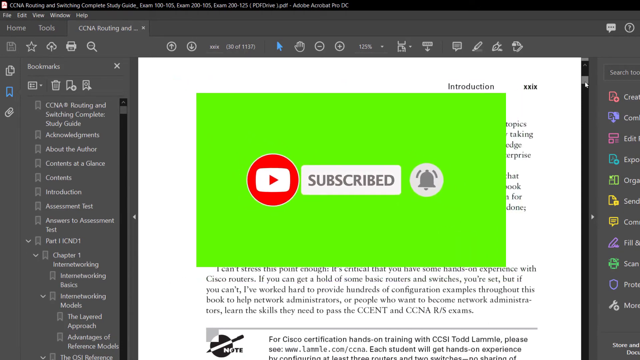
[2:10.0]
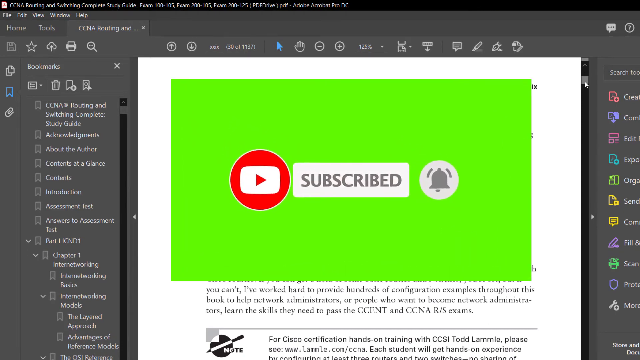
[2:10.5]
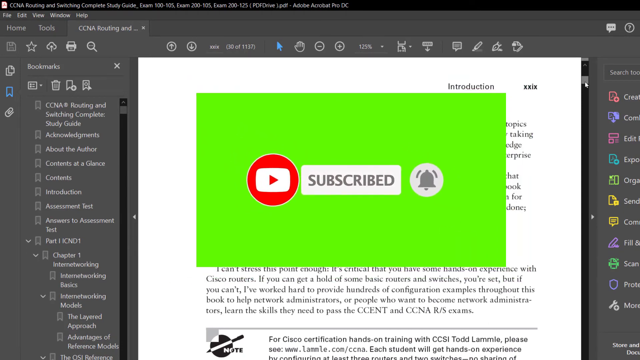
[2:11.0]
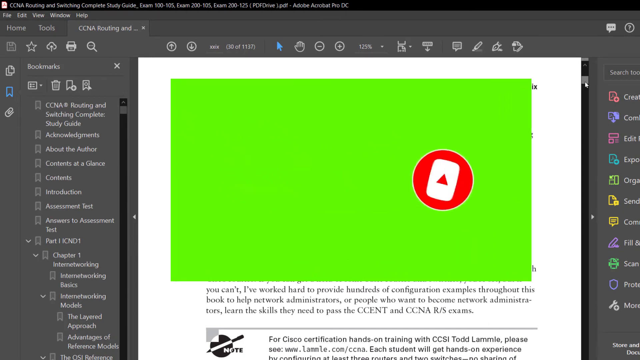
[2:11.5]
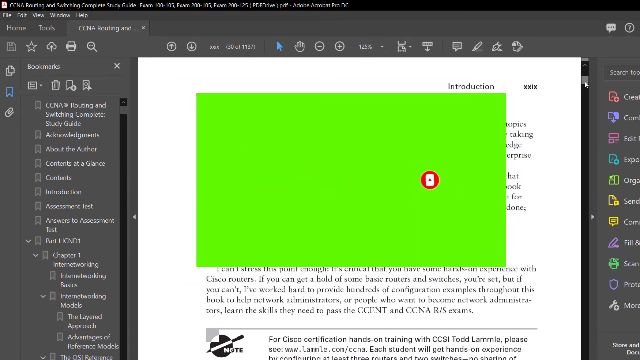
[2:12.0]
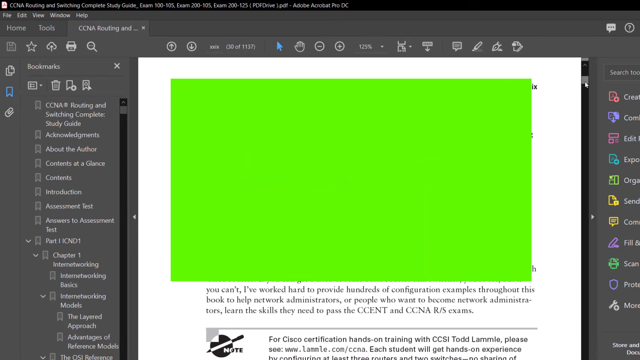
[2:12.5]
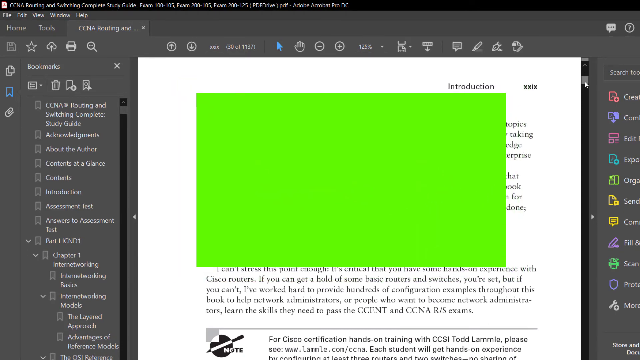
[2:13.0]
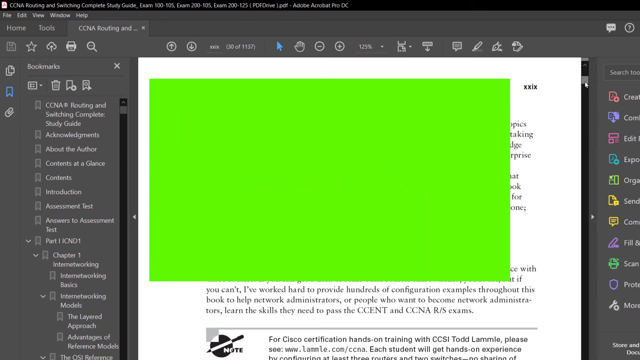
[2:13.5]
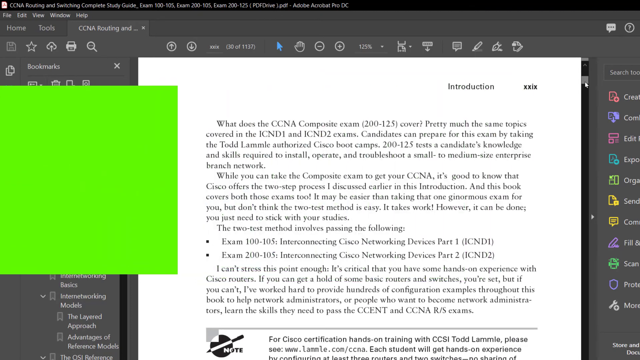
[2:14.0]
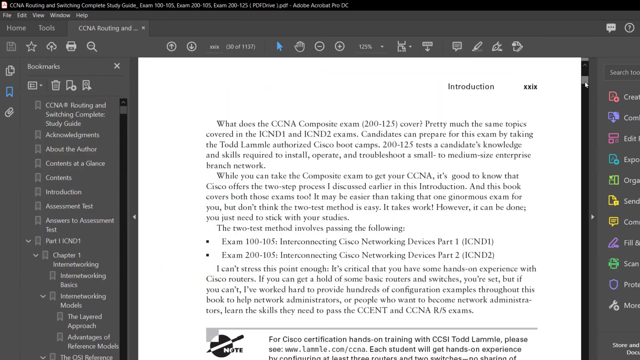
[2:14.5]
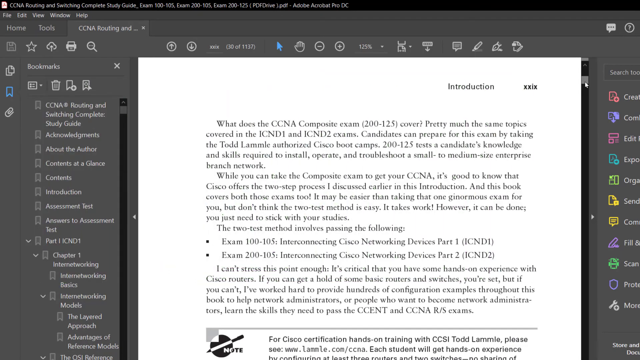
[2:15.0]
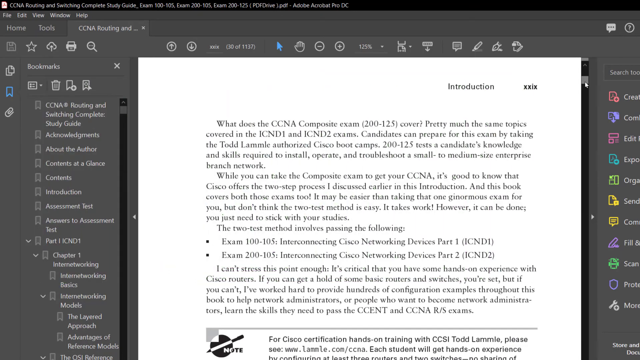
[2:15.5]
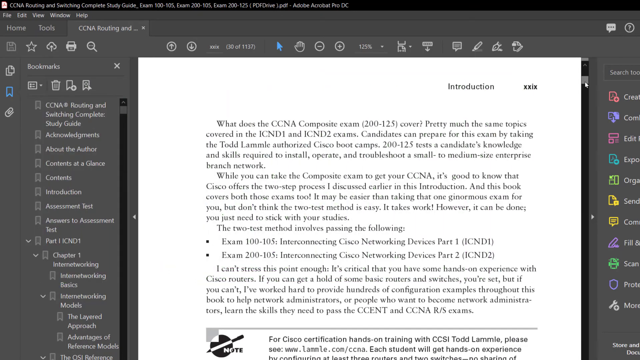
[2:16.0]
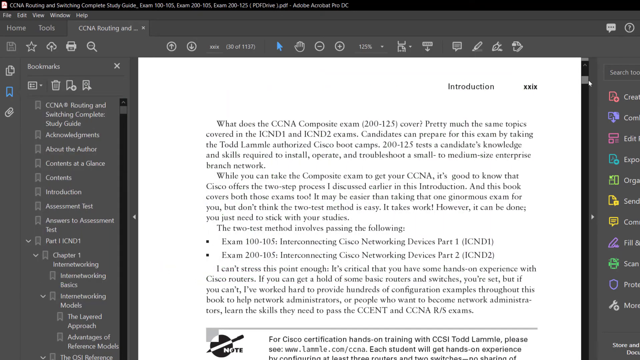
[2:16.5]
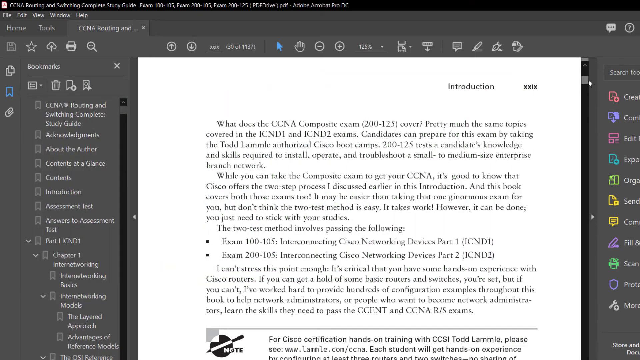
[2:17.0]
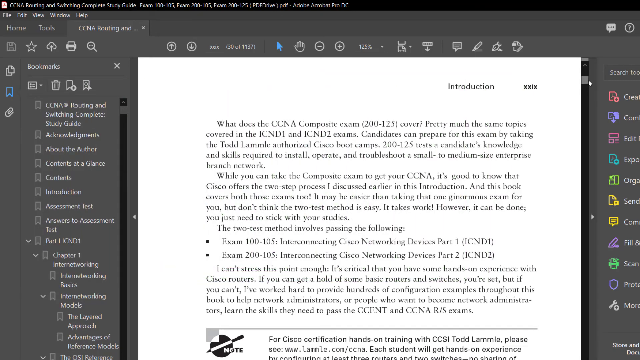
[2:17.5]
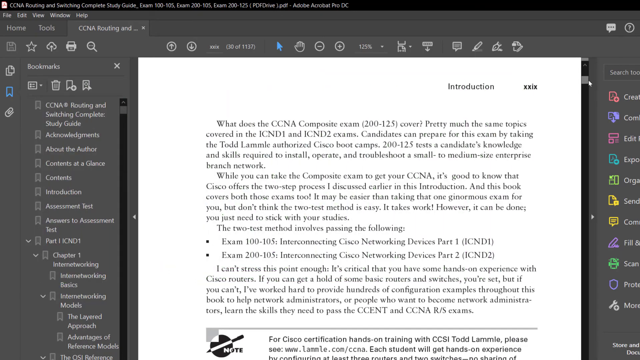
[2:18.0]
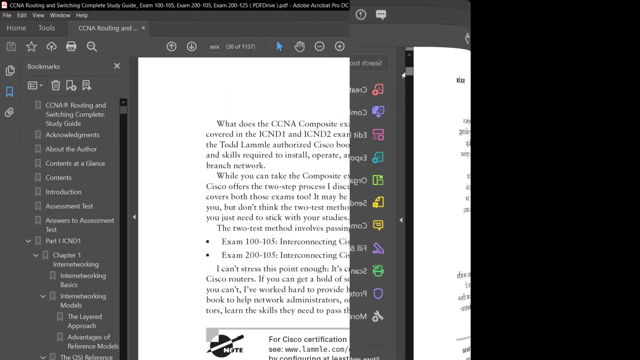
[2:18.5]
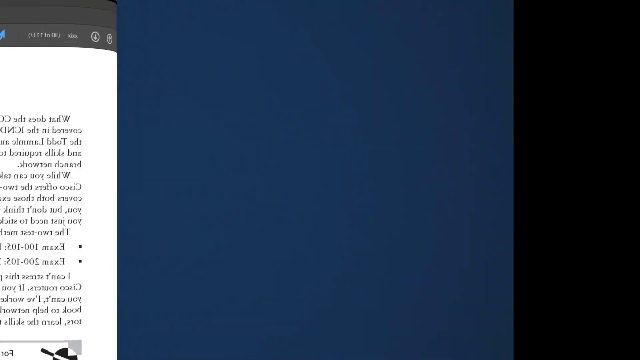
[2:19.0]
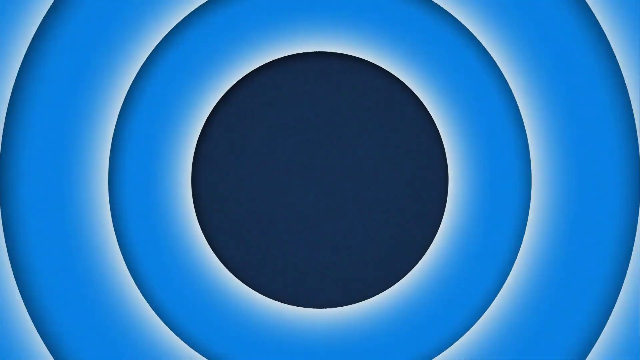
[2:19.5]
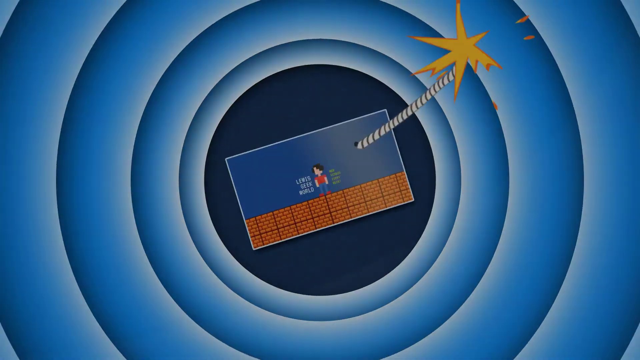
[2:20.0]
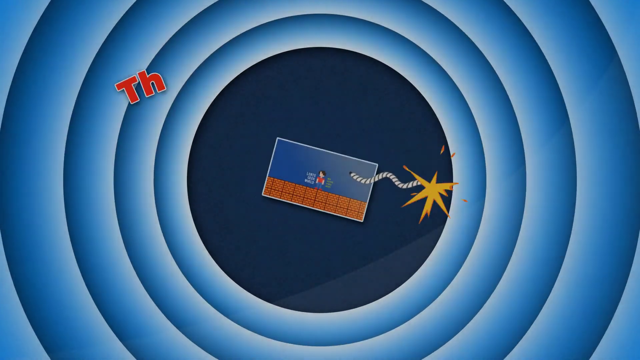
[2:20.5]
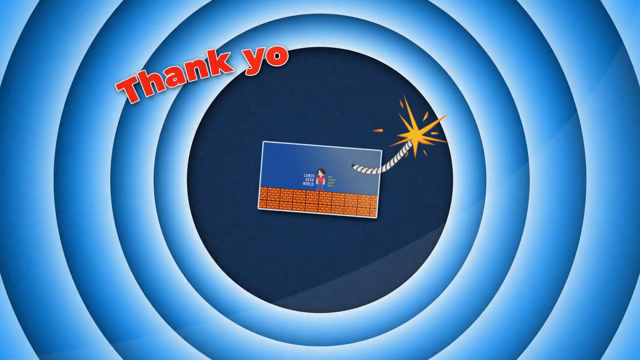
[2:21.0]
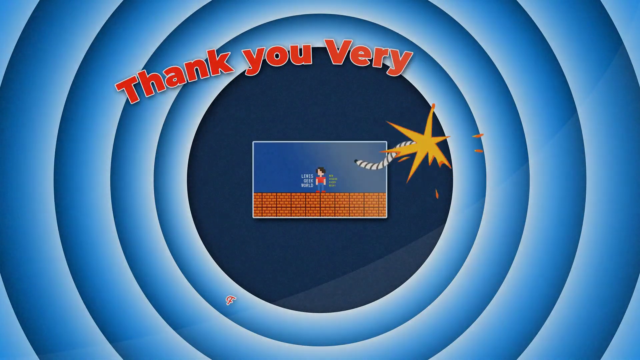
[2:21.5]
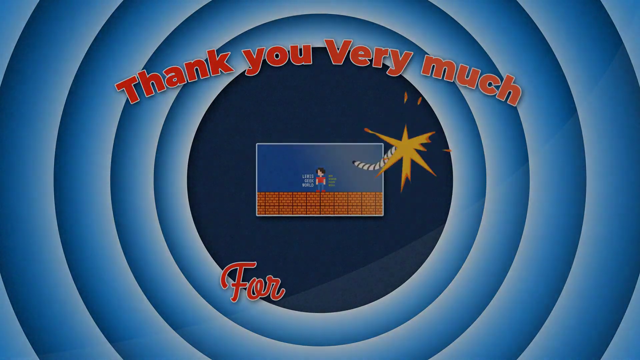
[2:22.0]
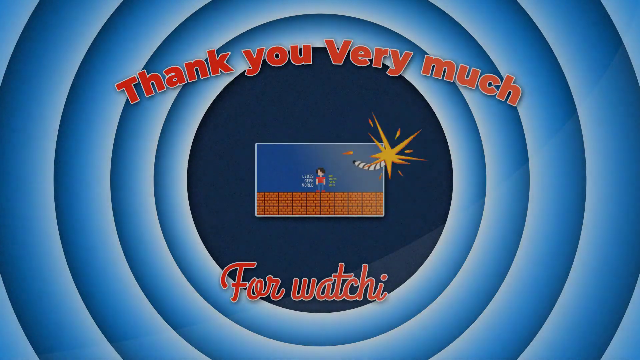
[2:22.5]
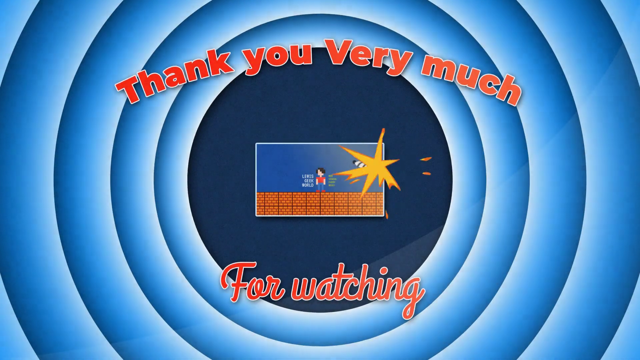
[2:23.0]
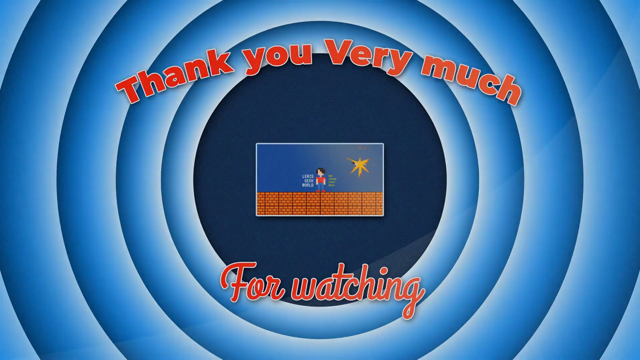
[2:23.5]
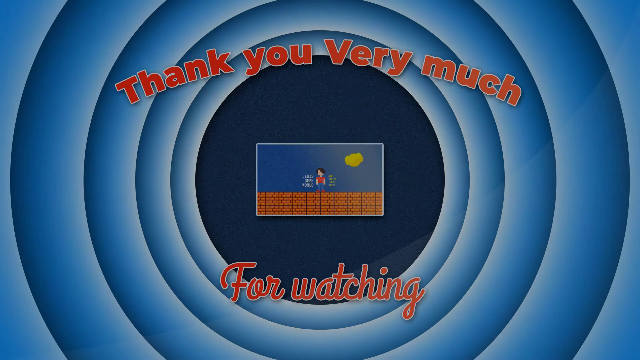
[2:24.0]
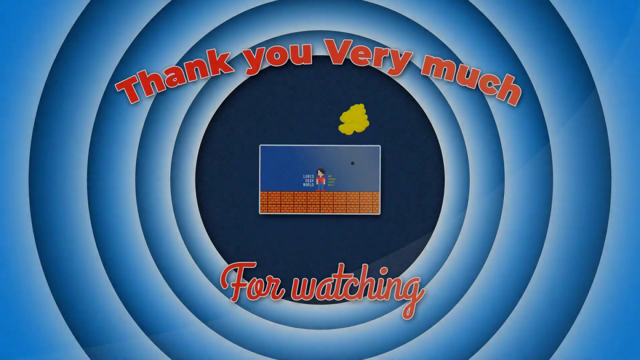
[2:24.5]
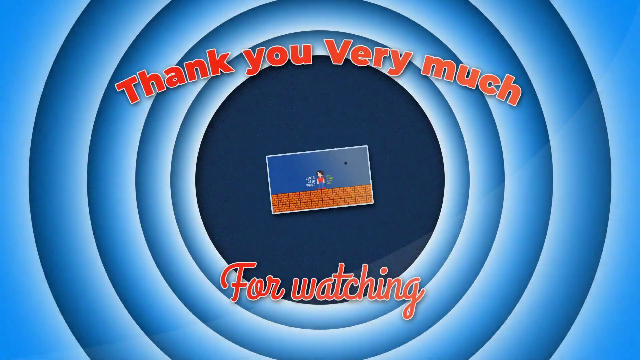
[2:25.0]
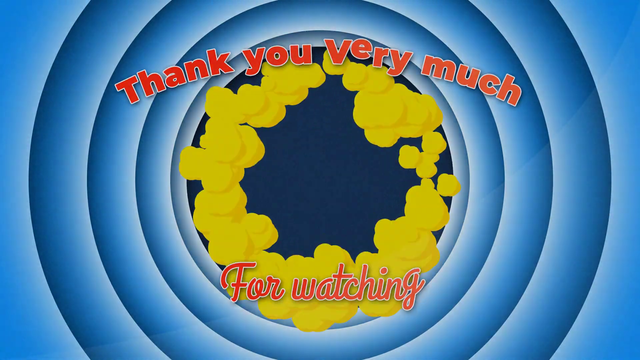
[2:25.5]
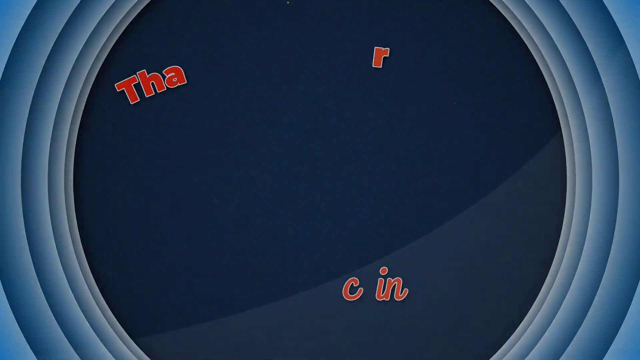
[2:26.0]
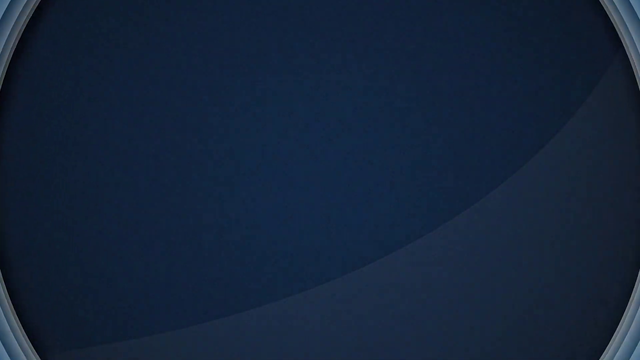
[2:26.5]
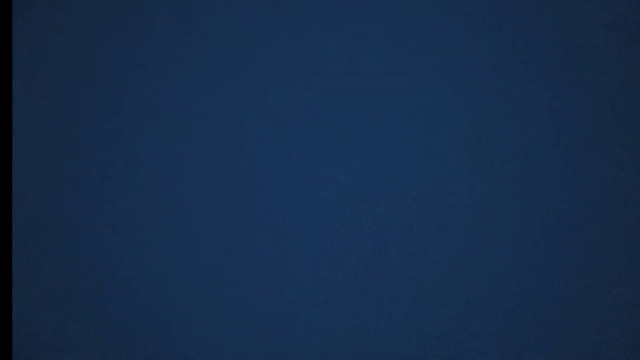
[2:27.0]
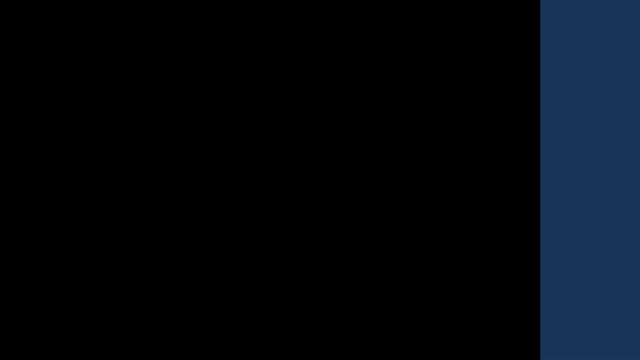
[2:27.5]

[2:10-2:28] The green neon box with the YouTube logo, the "subscribed" button and the bell moves toward and away from the viewer, almost like a heart beating. The YouTube logo, which is in a circle, moves across the neon box from left to right, wiping out the word "subscribed" and the bell. The YouTube symbol turns vertical and disappears, leaving the green neon box, which then moves out to the left side of the screen. A close-up view of the document follows and is folded over like a page being turned. This transitions to concentric circles, now blue, with the rectangle containing the cartoonish picture on the inside and a rope with a little spark of fire lit on its end. "thank you very much" is written in an arch at the top, with "for watching" below it, all in red text. The rectangle or bomb explodes into a yellow poof of smoke, and the screen turns blue.